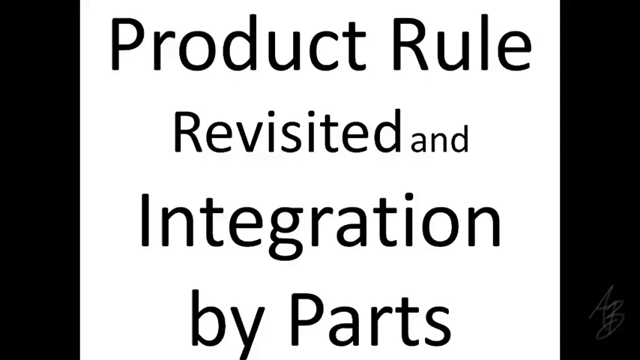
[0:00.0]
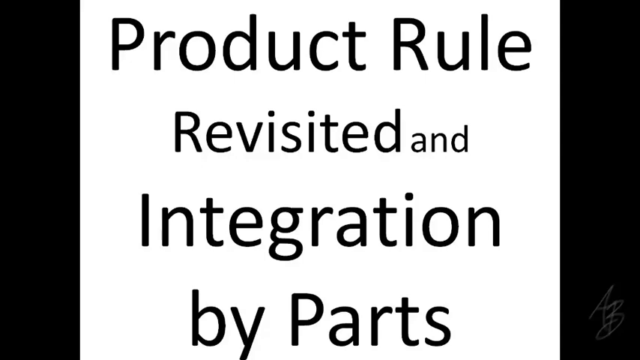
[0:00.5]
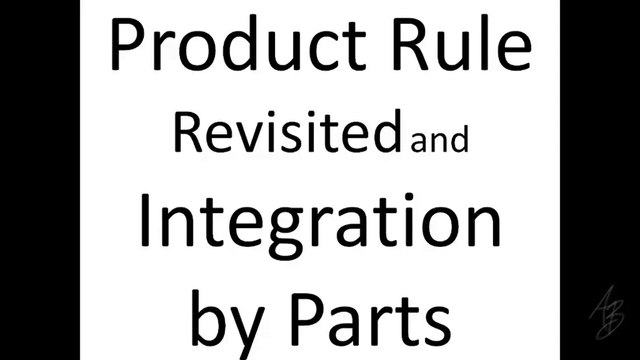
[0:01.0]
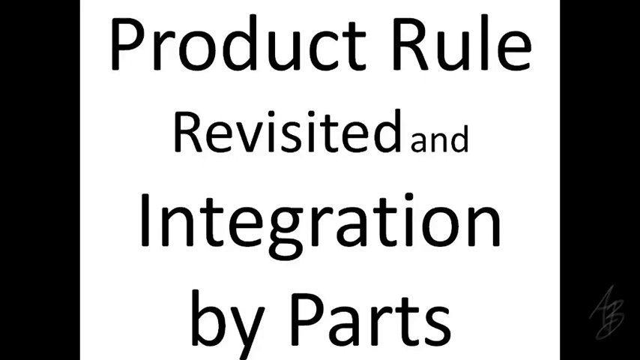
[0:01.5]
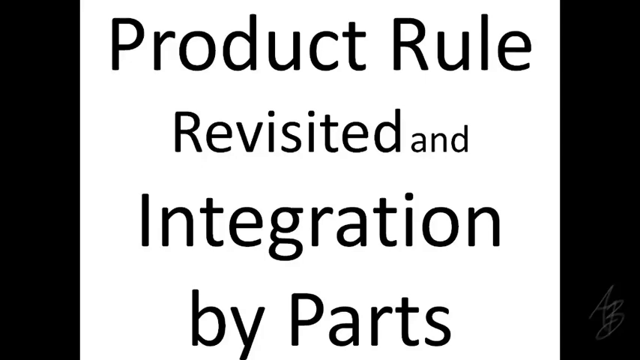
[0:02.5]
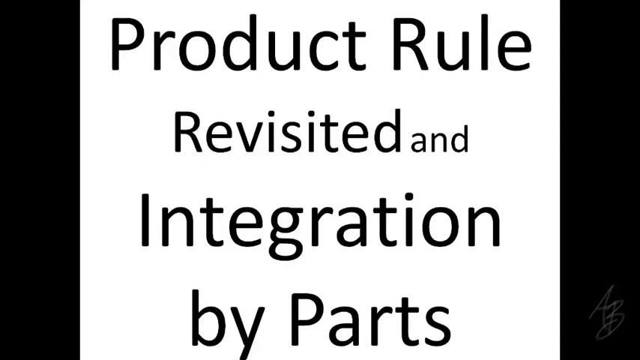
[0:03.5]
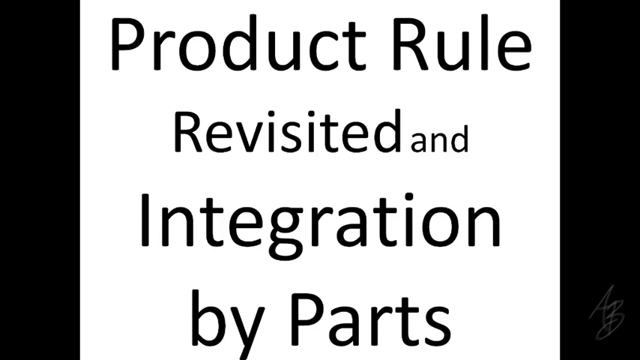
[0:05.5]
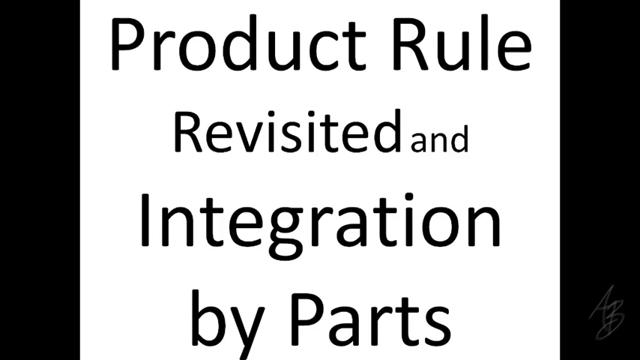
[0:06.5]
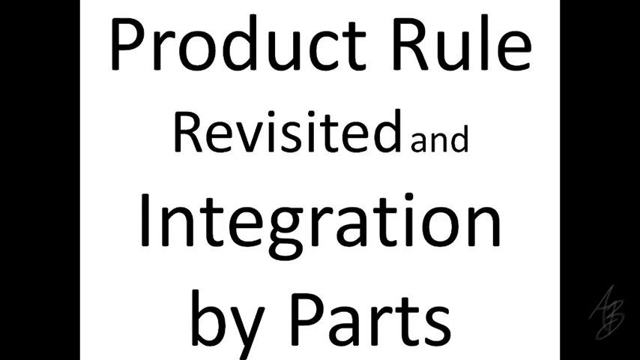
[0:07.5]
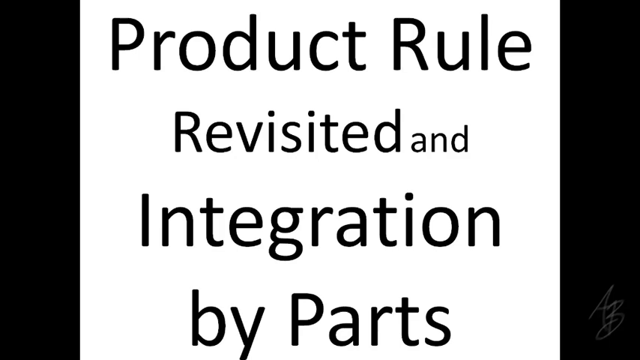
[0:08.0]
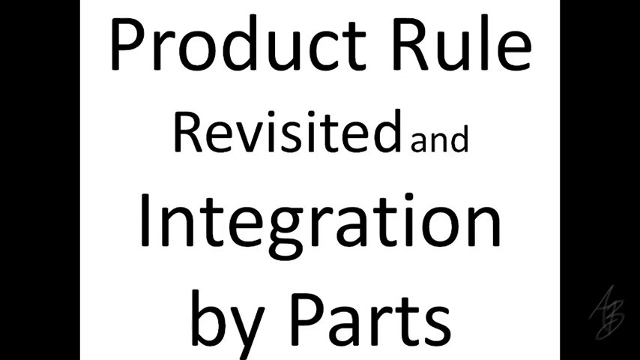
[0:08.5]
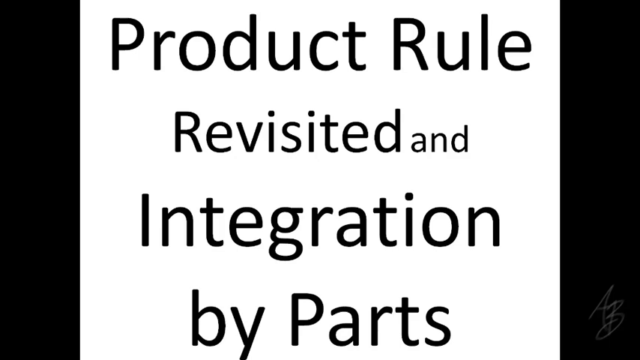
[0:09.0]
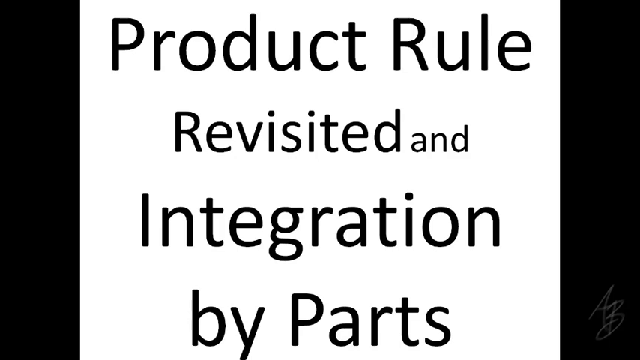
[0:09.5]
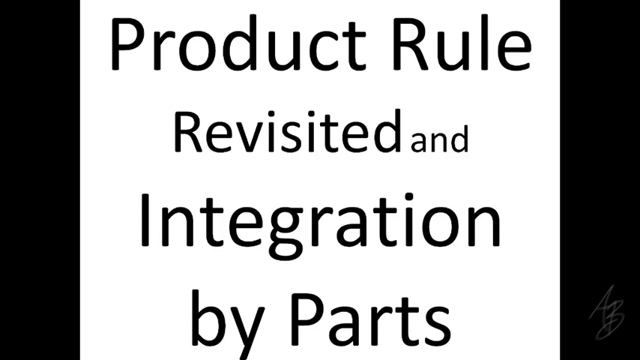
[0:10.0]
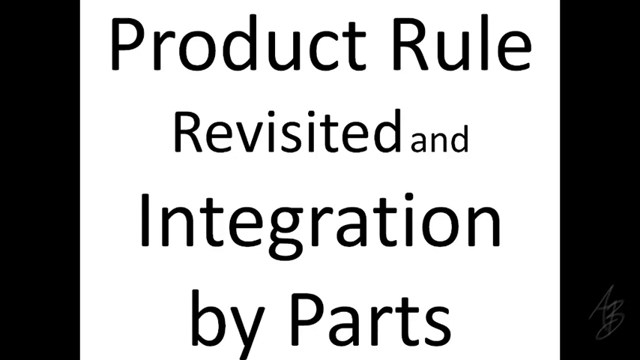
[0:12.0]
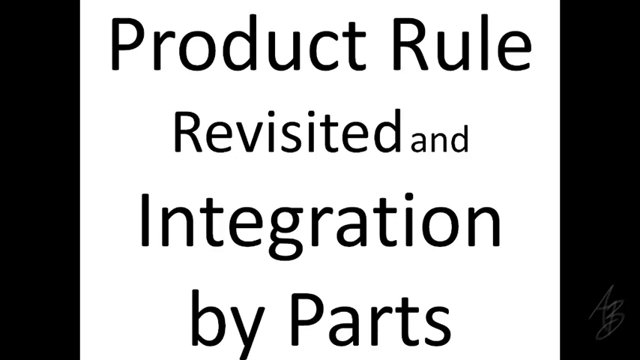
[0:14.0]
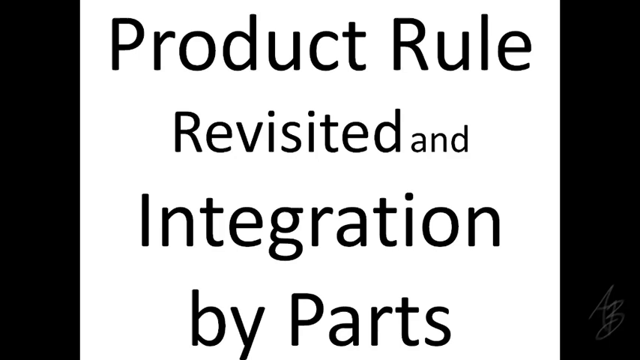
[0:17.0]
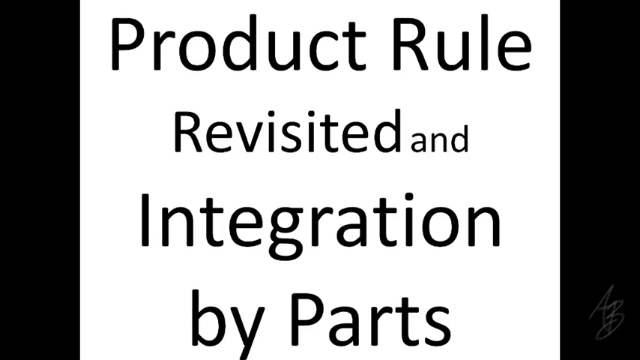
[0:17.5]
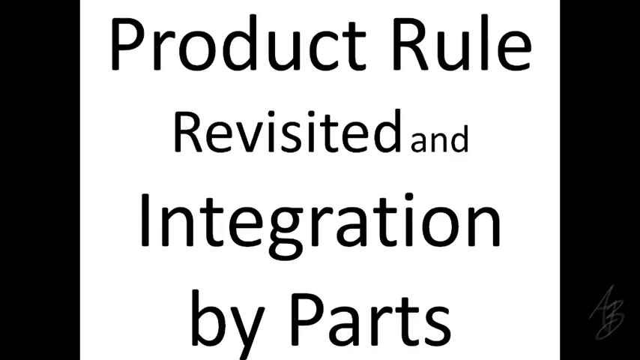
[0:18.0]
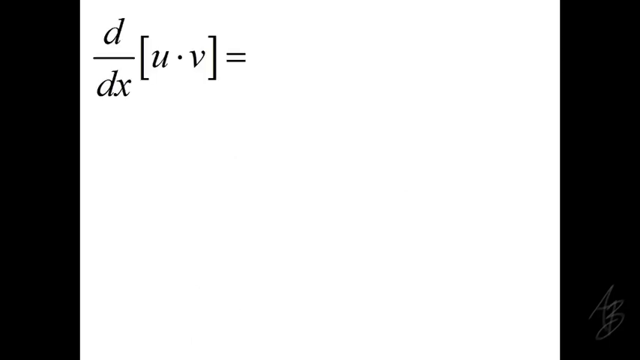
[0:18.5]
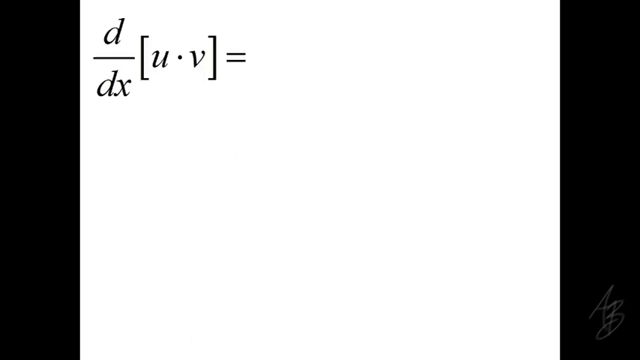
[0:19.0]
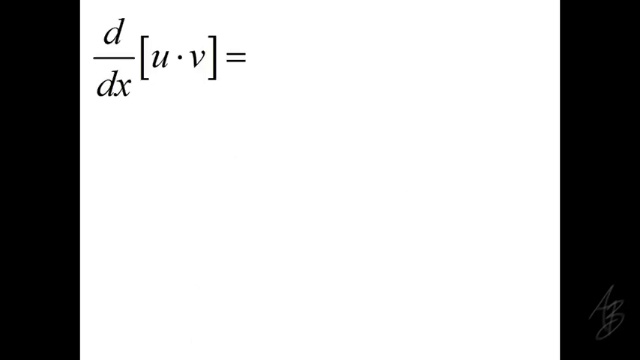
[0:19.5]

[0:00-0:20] The video begins with a white title graphic with black borders on the sides and a predominantly white background, in a large but narrow black font, reading "Product Rule Revisited and Integration by Parts." The text is in a modern sans-serif font with title capitalization, and the words are of differing sizes: "Product Rule" is in a bigger font; "Revisited," below it, is slightly smaller; "And" is quite a bit smaller than "Revisited"; "Integration" is the same size as "Product Rule"; and "By Parts" is the same size as "Integration." It appears to be a mathematics tutorial, more specifically calculus. A derivative expression is shown: d over dx, bracket, u times v, close bracket, equals.